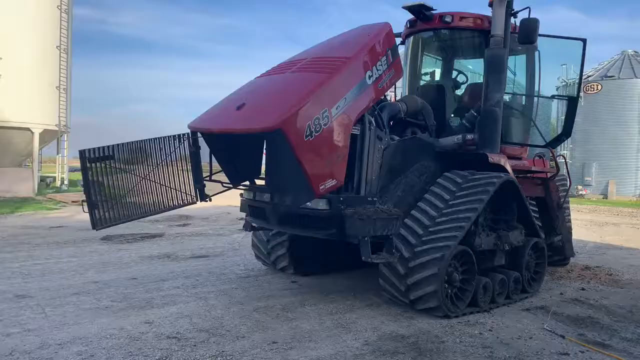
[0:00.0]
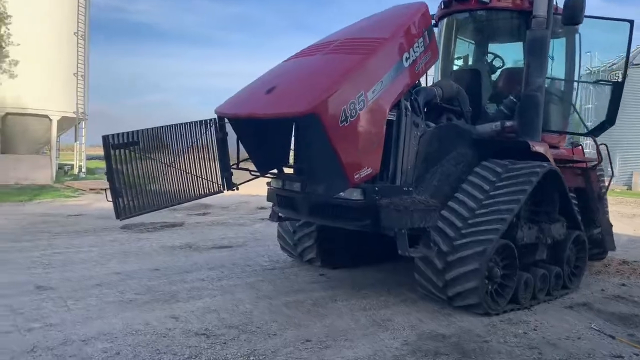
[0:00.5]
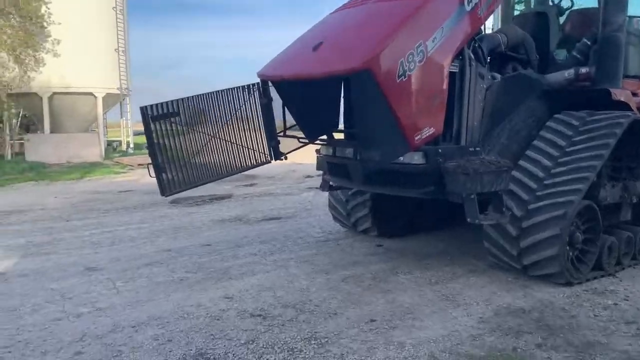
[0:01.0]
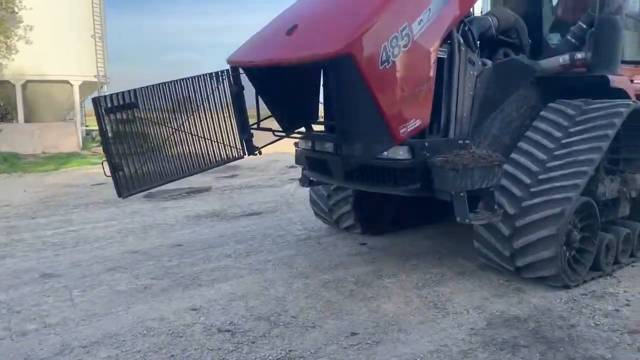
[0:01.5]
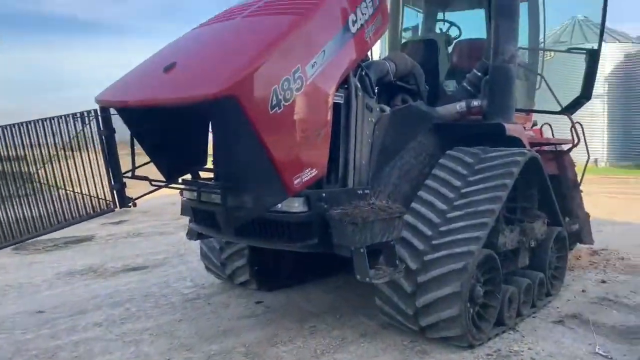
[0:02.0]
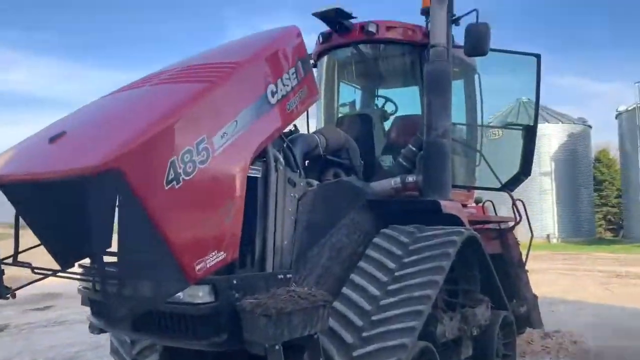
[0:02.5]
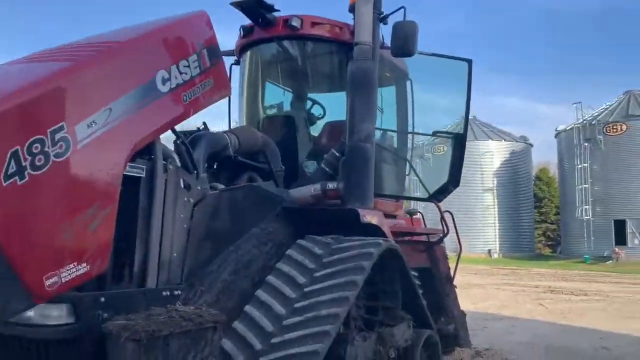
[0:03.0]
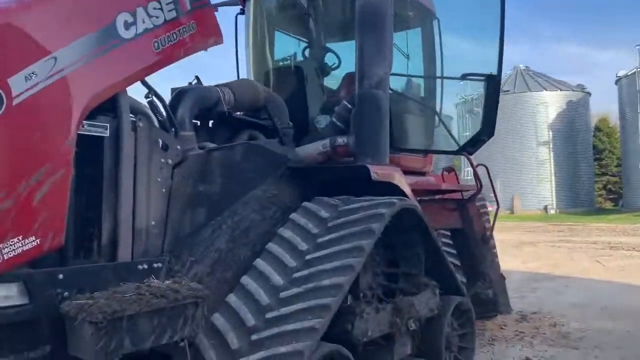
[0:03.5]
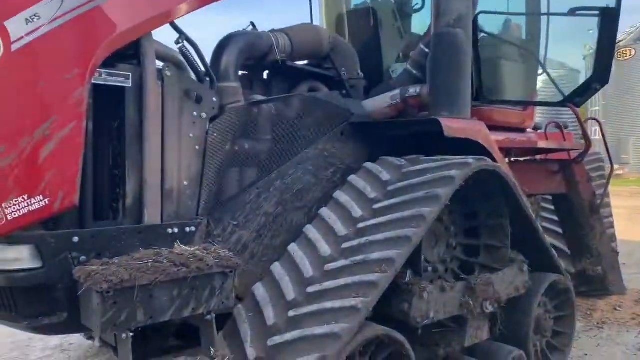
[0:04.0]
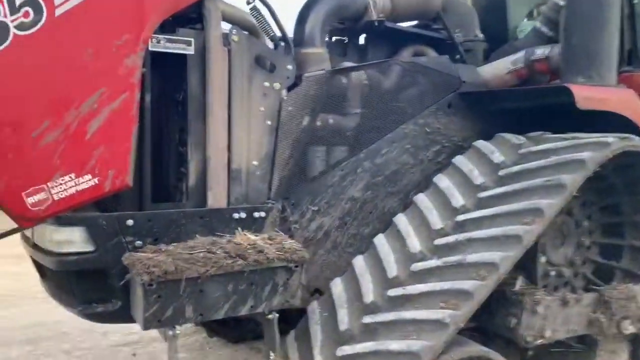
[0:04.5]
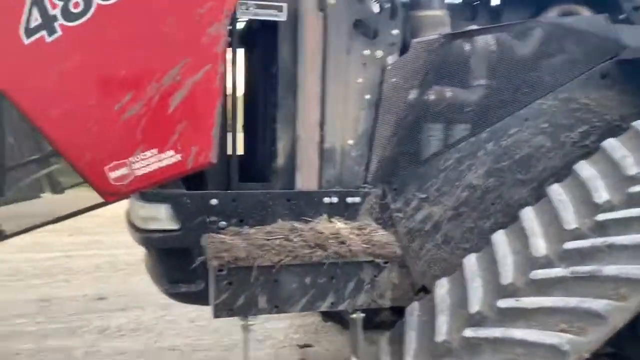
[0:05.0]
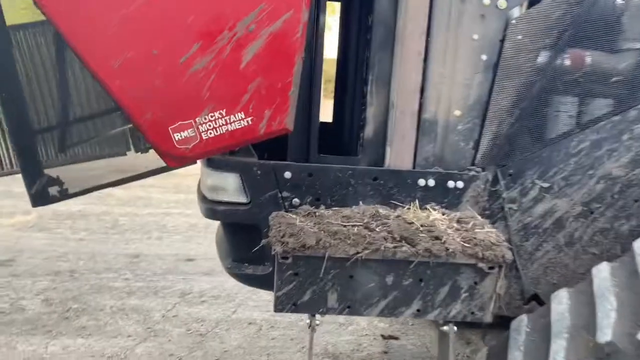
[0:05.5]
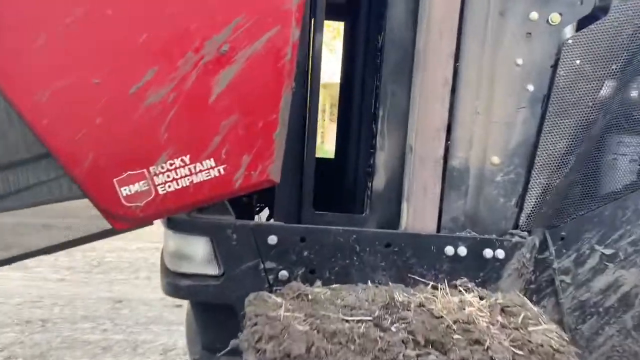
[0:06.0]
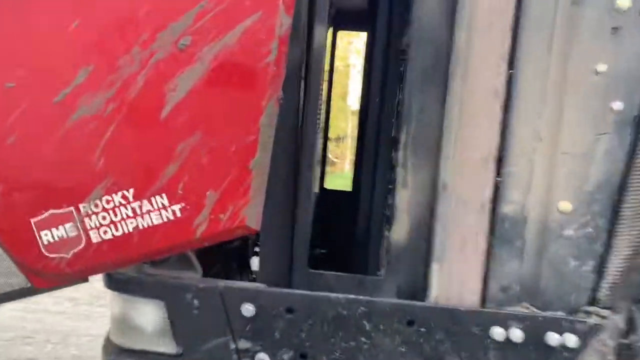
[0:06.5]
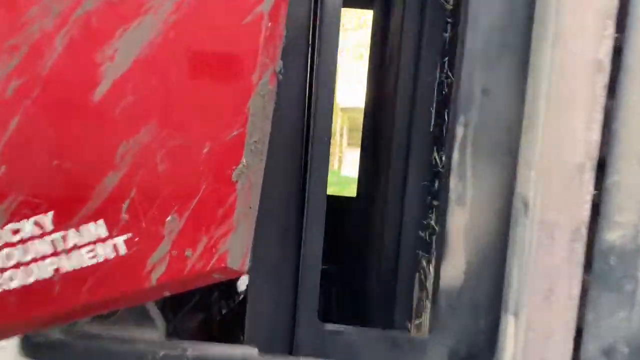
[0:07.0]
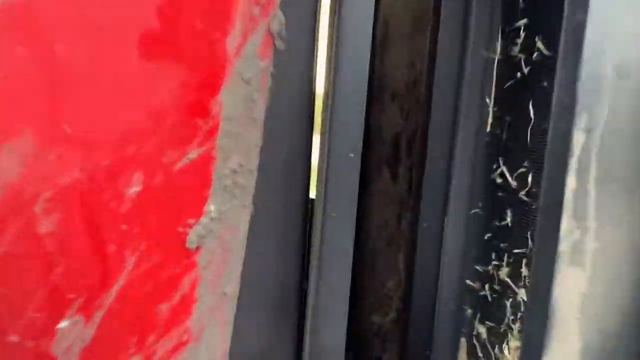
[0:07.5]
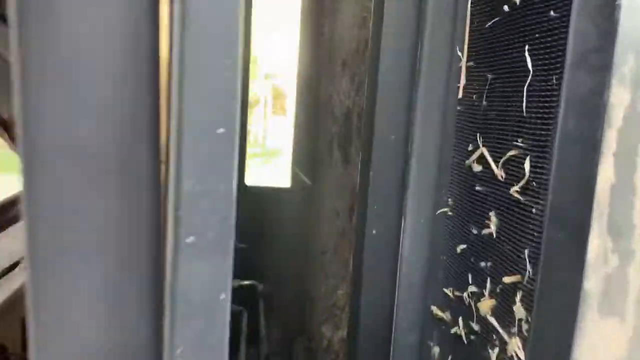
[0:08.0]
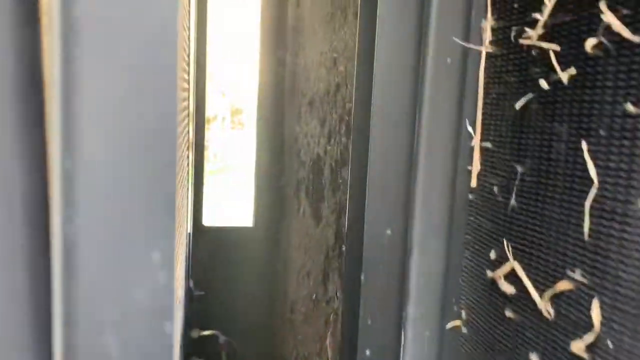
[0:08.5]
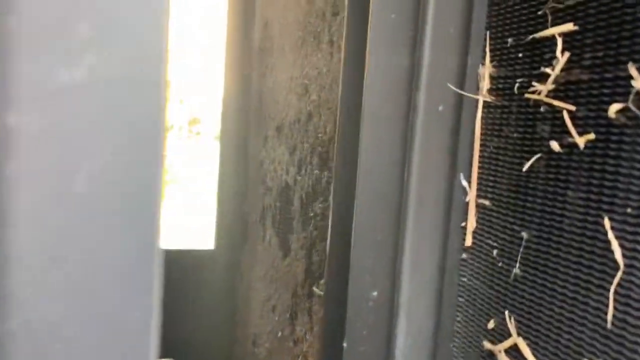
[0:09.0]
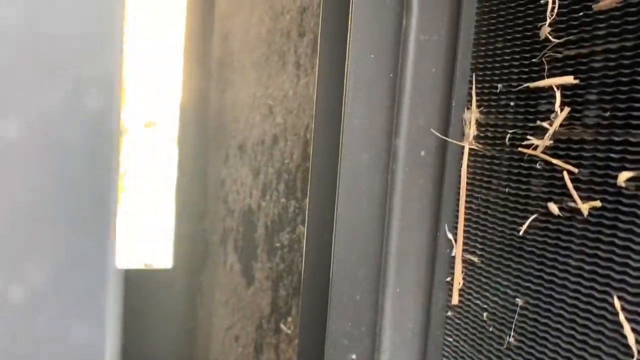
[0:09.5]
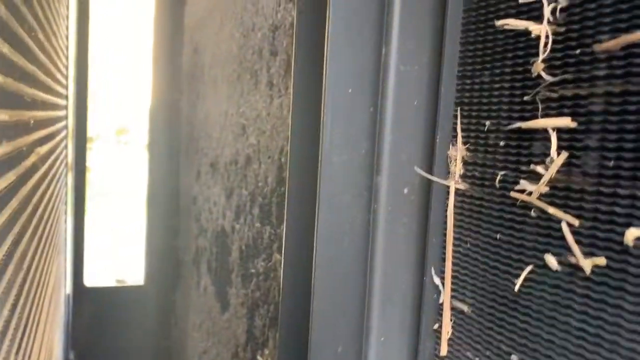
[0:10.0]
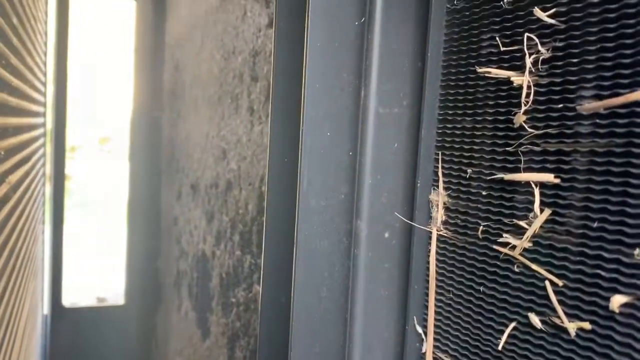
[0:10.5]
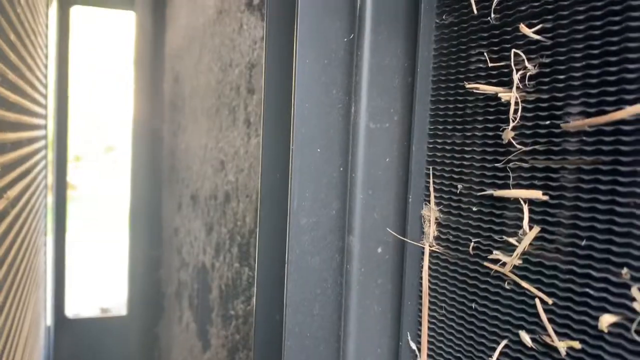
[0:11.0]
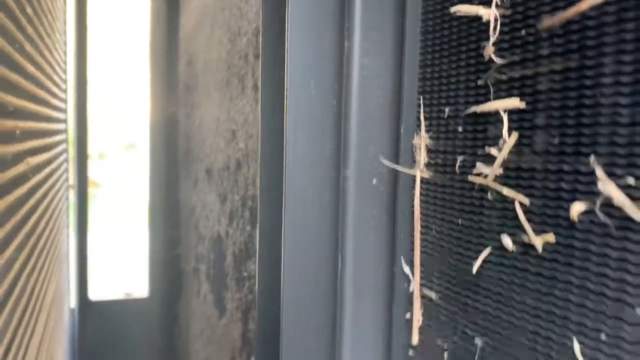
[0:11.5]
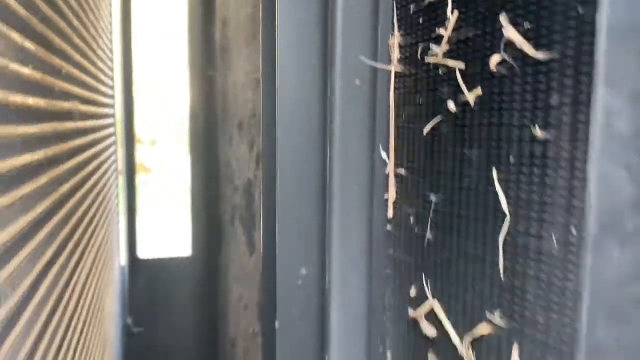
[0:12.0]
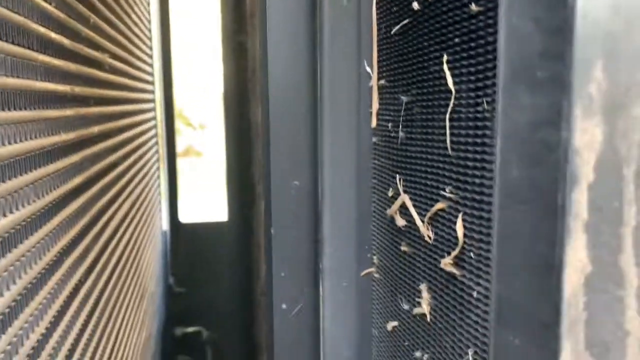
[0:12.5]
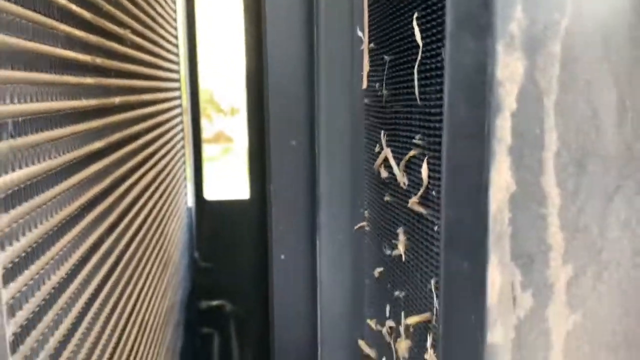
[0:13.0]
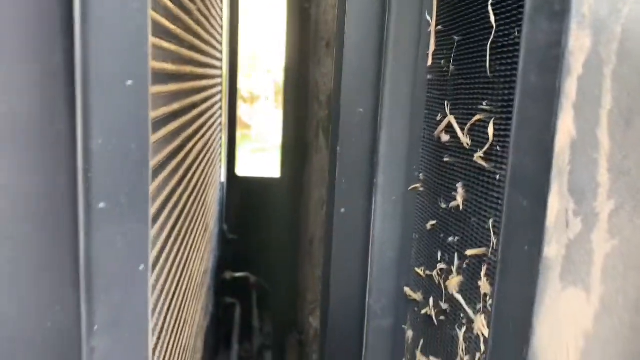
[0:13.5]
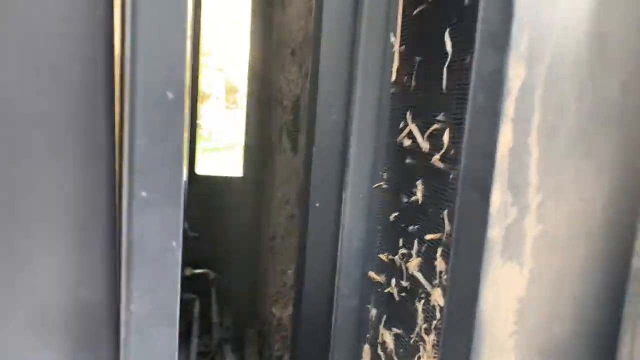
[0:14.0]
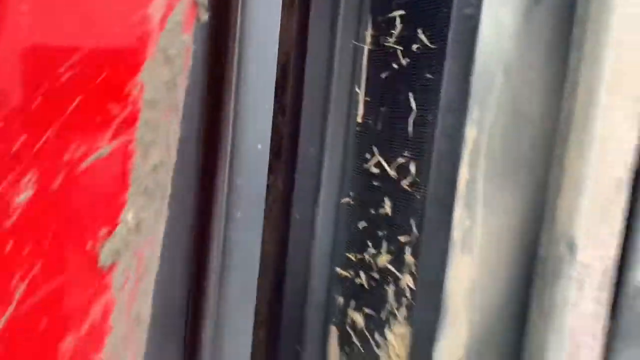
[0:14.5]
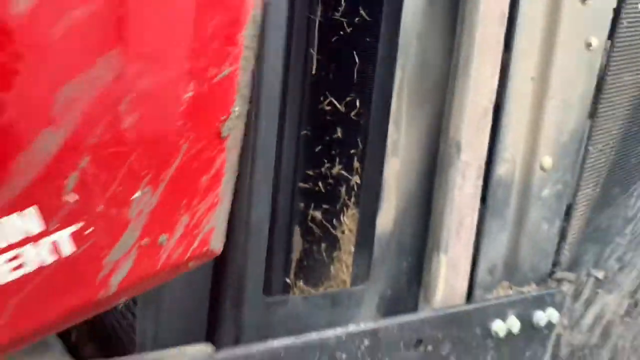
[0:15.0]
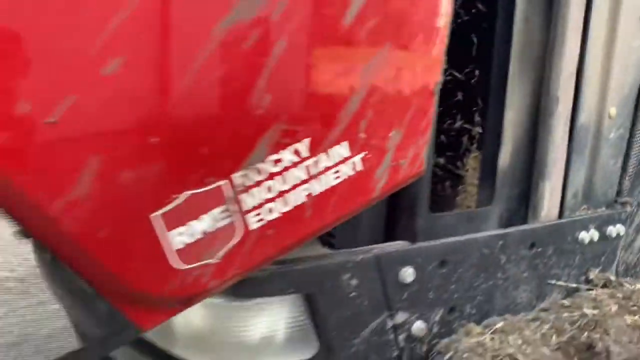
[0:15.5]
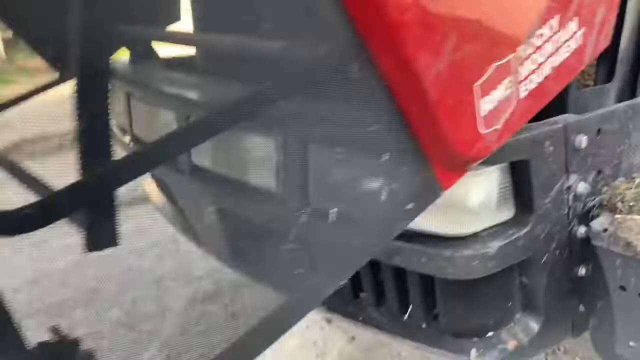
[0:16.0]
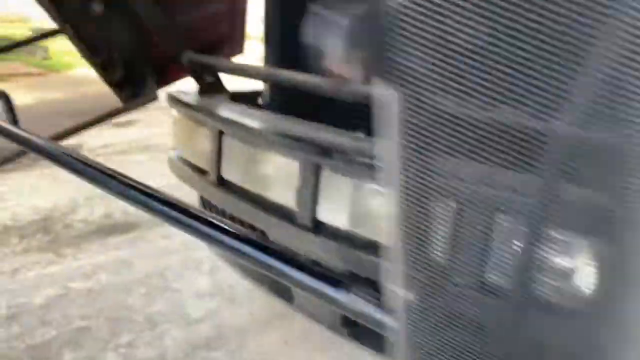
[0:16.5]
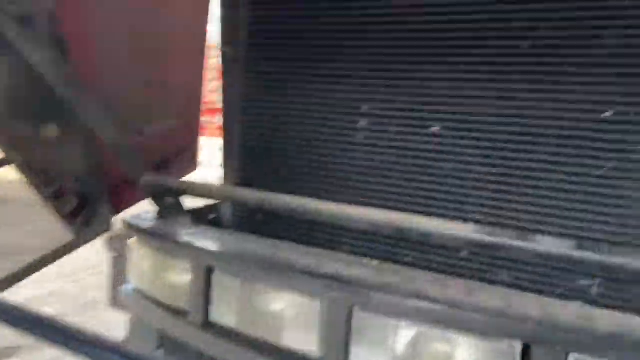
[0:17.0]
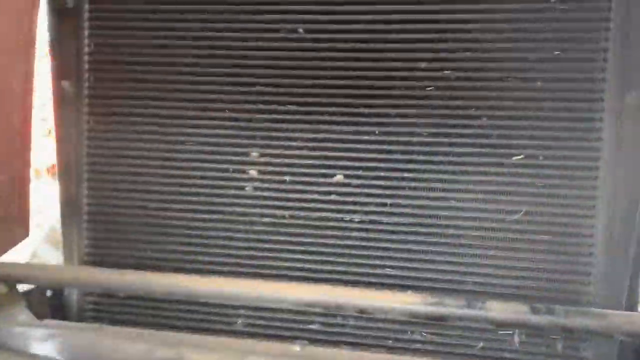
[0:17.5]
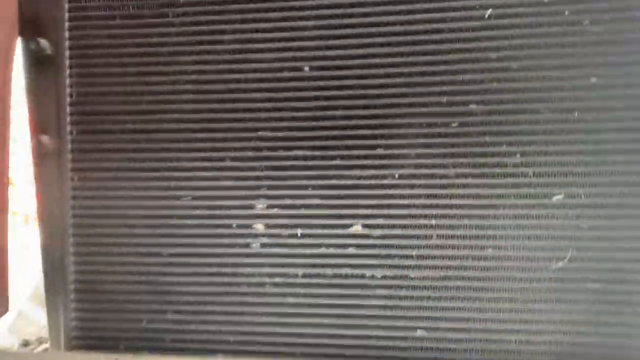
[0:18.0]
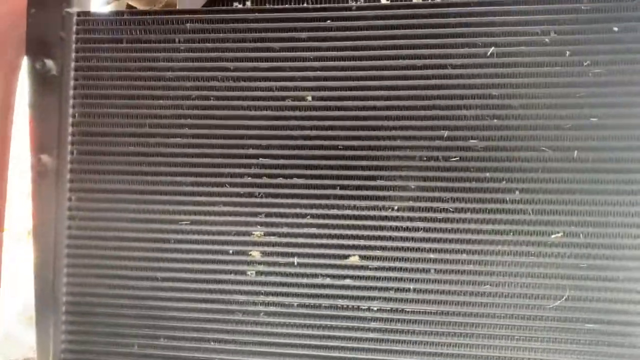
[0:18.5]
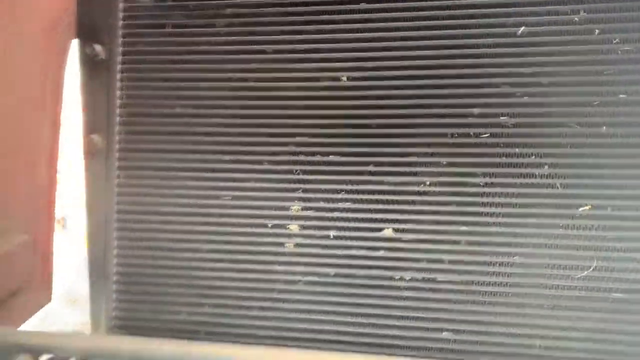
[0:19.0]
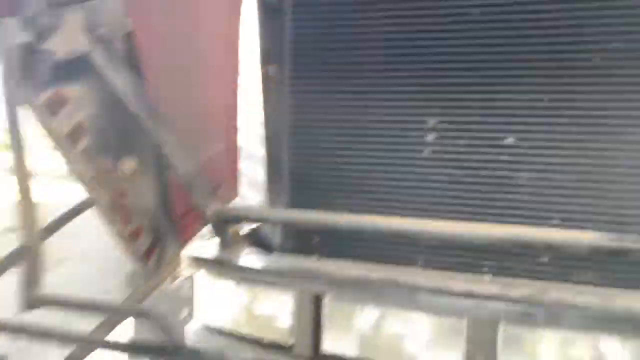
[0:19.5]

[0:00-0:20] A large vehicle that kind of looks like a tractor is on the right side. The view moves close to it and zooms in on a specific area, showing what looks like some sort of air filter in the tractor. The view then goes to the left side to look at the front of the tractor, where there is what looks like a radiator or a filter. The front part of the tractor is propped open. The person looks inside the front of the tractor at what looks like a dirty filter with a lot of built-up dust or some sort of light gray debris. The view backs out, and the person walks from the left side of the tractor to the propped-open front, where they are looking at either a filter or a radiator inside. The tractor is black and red.